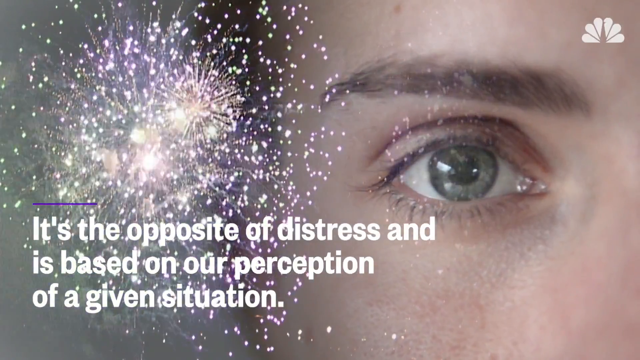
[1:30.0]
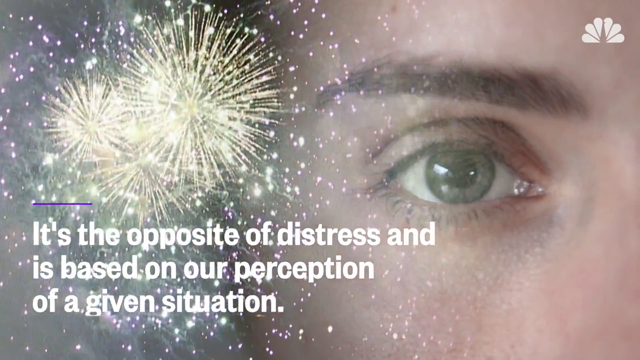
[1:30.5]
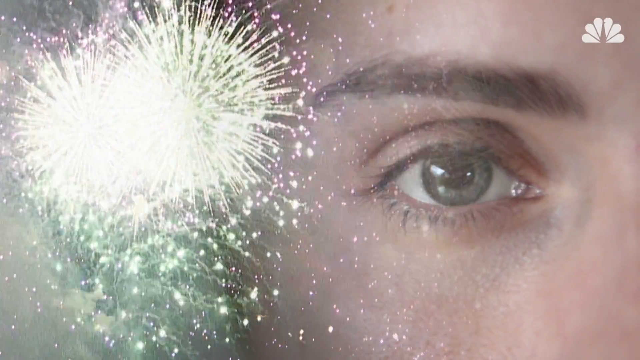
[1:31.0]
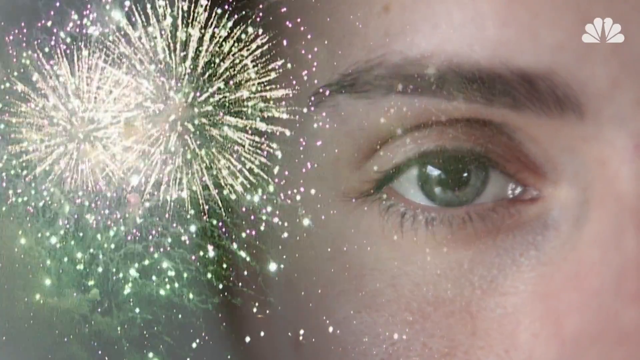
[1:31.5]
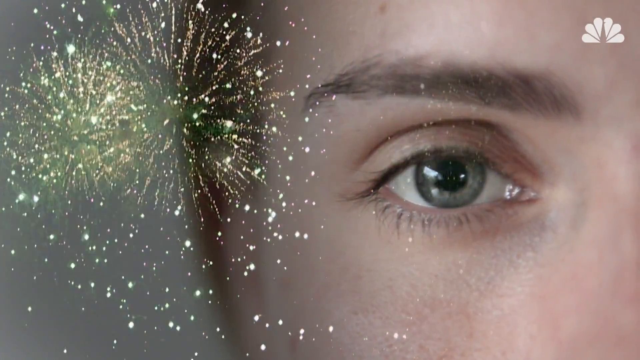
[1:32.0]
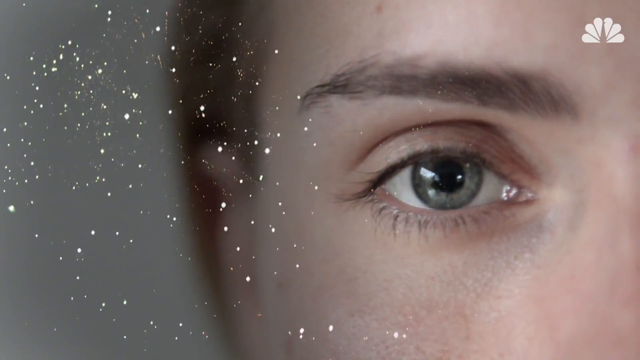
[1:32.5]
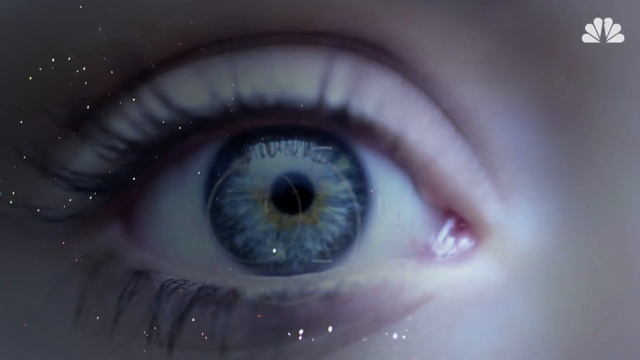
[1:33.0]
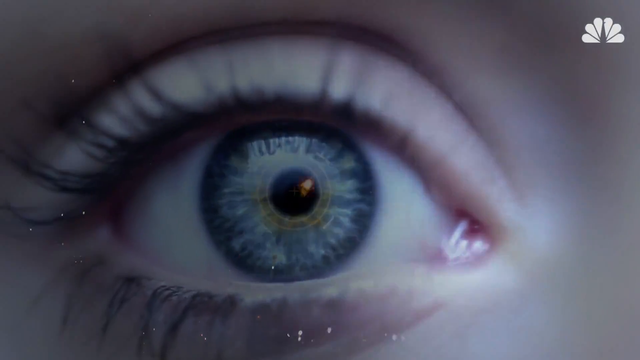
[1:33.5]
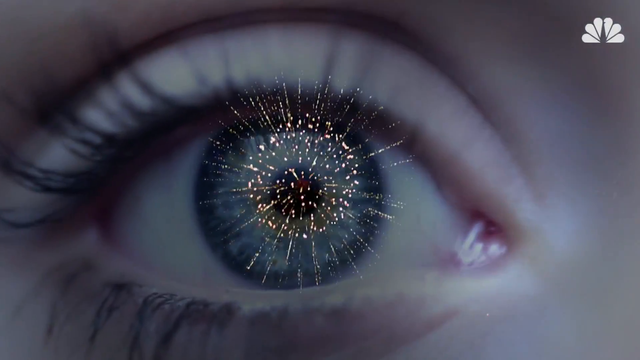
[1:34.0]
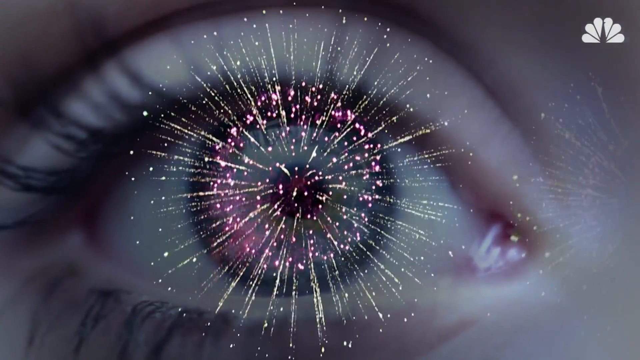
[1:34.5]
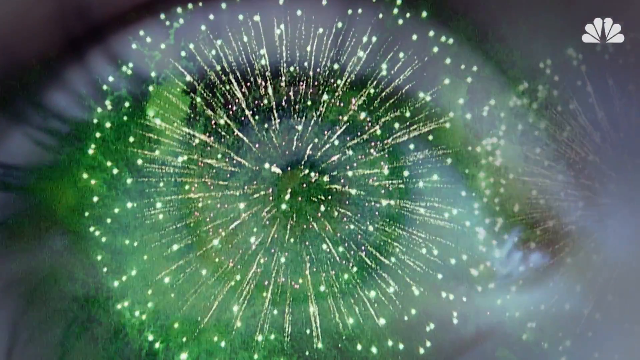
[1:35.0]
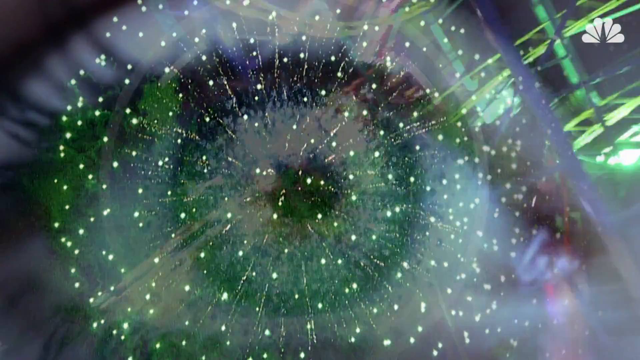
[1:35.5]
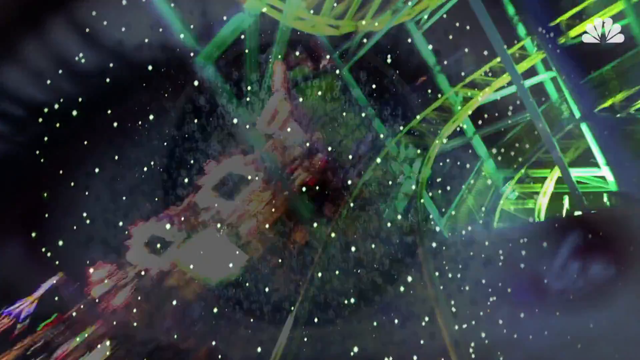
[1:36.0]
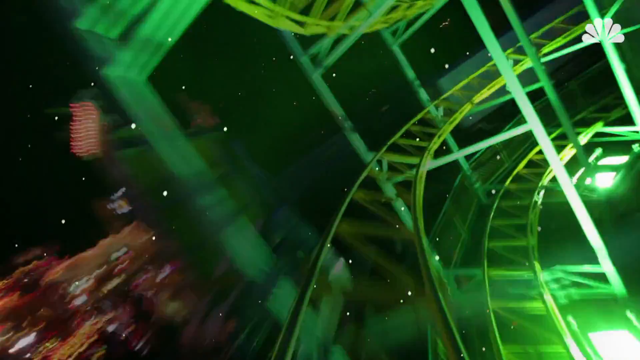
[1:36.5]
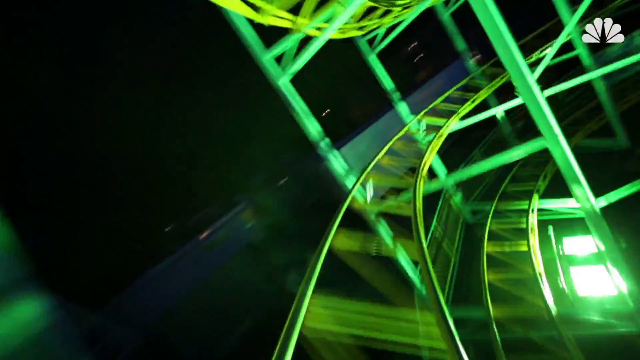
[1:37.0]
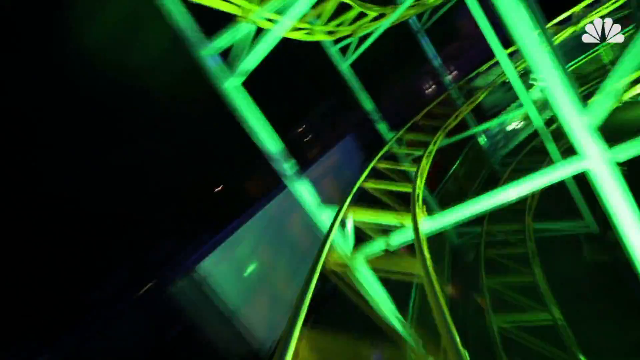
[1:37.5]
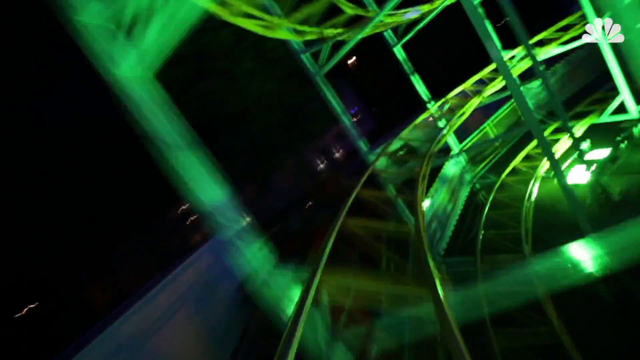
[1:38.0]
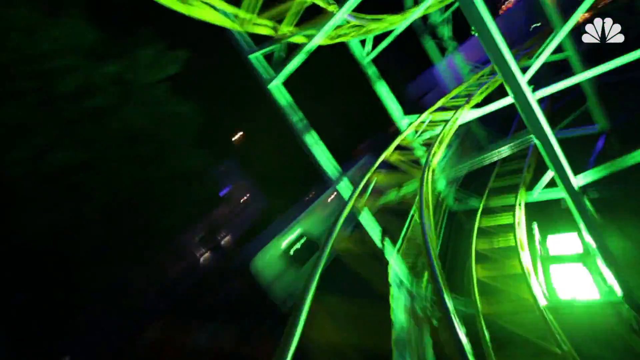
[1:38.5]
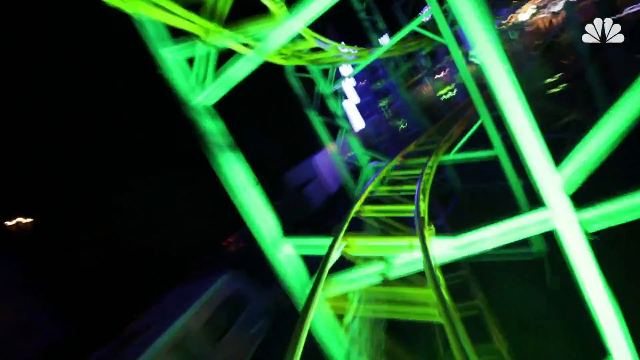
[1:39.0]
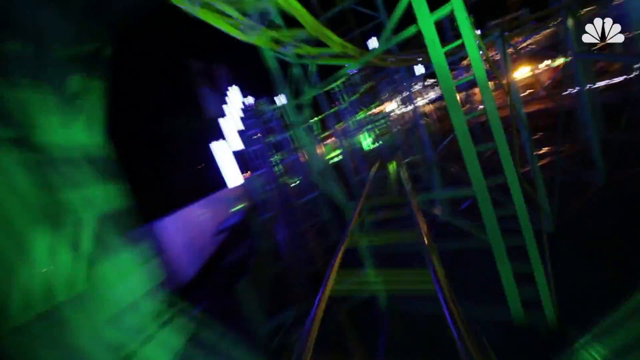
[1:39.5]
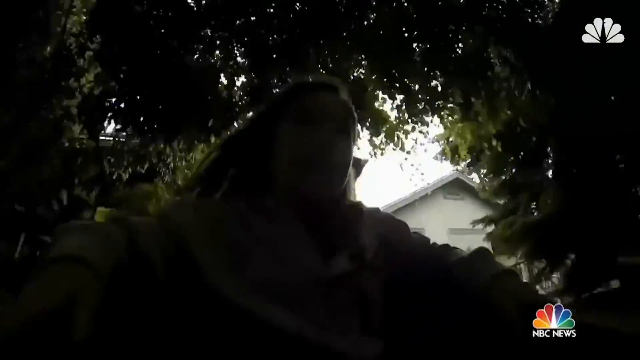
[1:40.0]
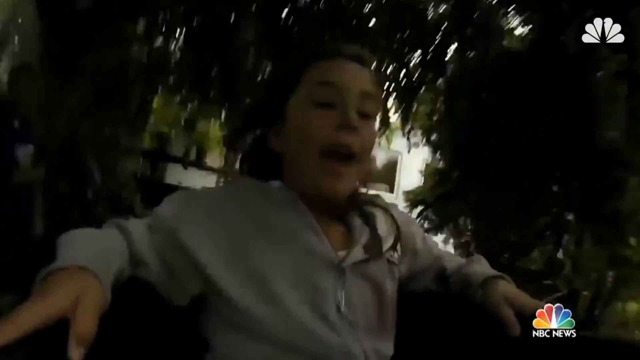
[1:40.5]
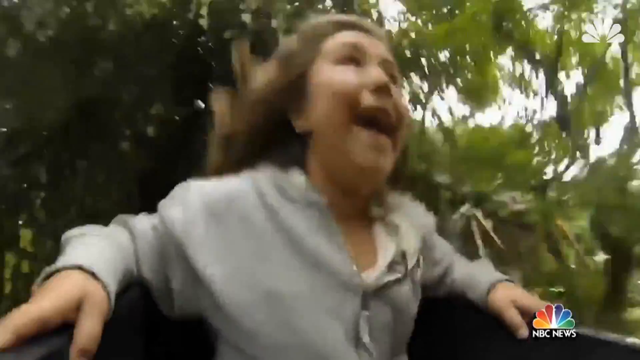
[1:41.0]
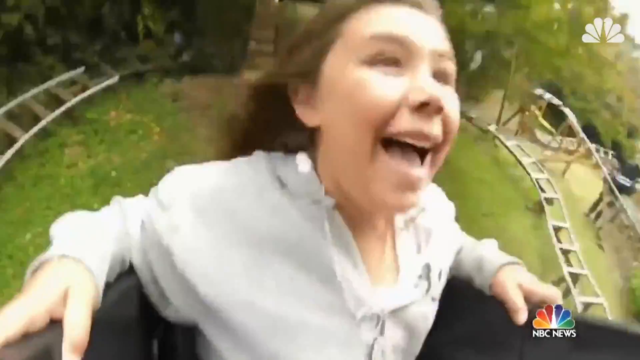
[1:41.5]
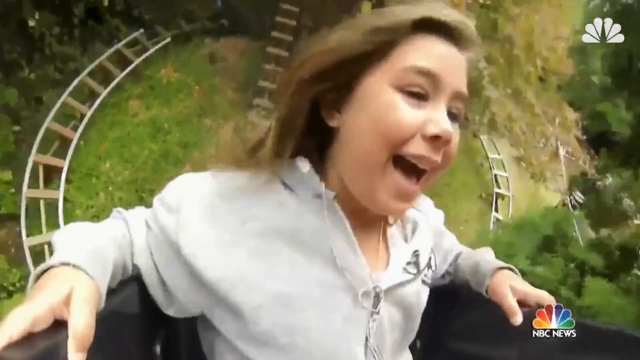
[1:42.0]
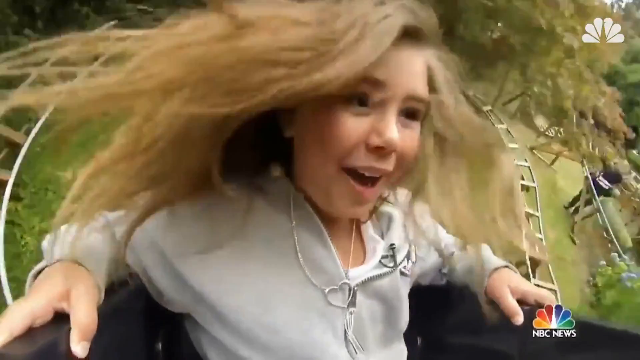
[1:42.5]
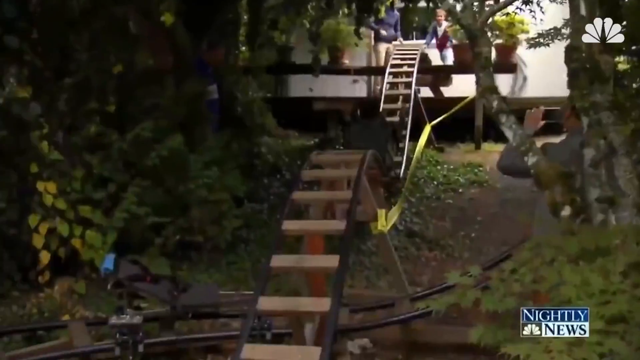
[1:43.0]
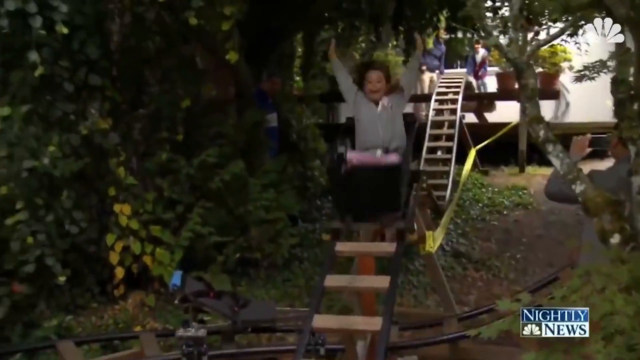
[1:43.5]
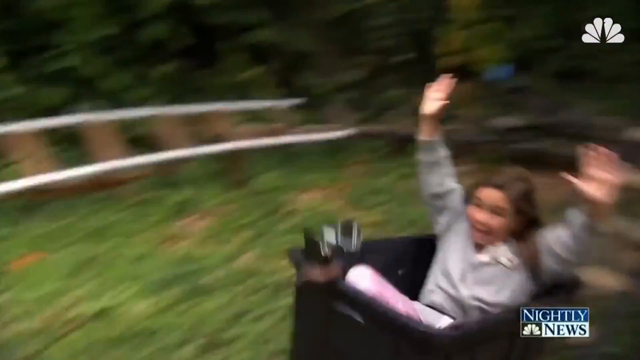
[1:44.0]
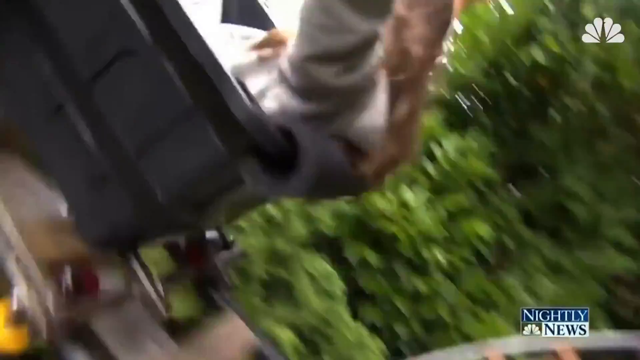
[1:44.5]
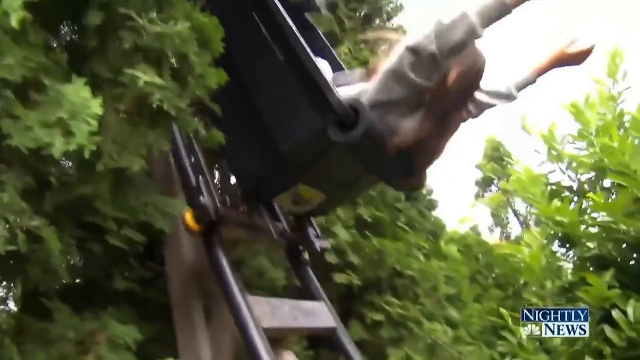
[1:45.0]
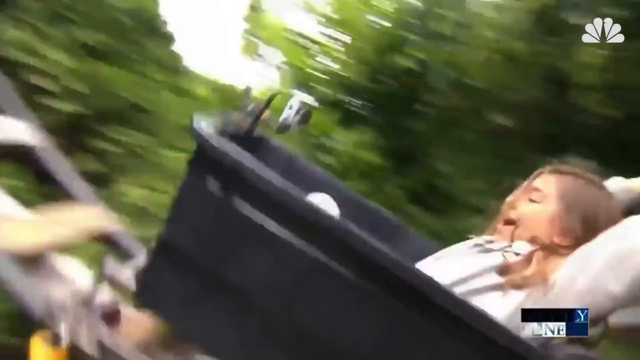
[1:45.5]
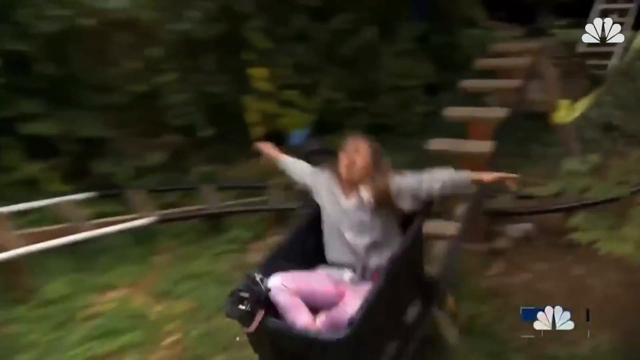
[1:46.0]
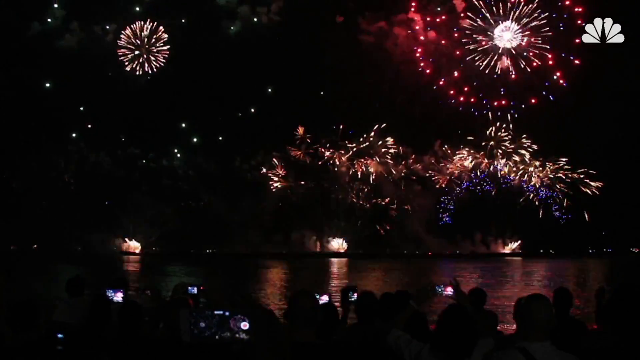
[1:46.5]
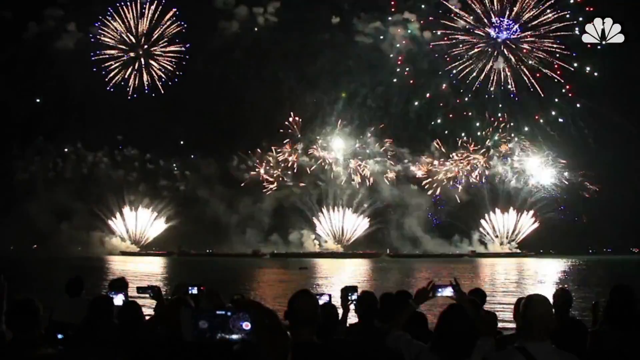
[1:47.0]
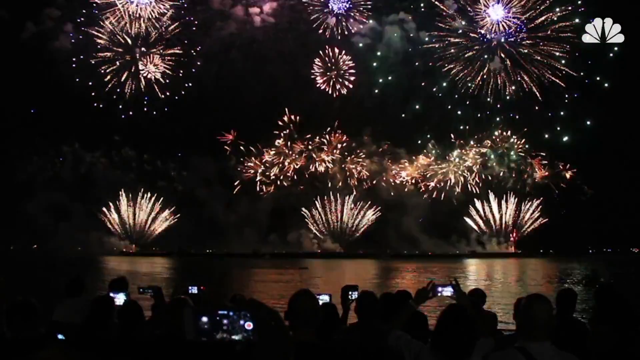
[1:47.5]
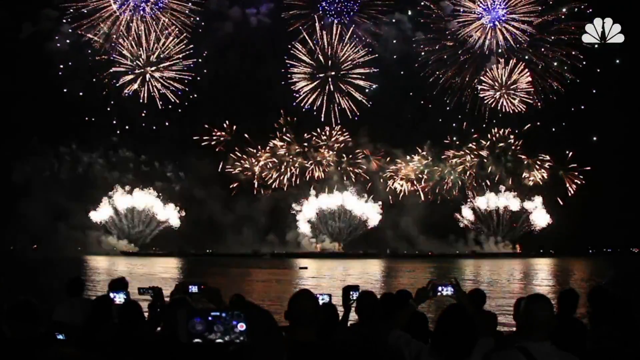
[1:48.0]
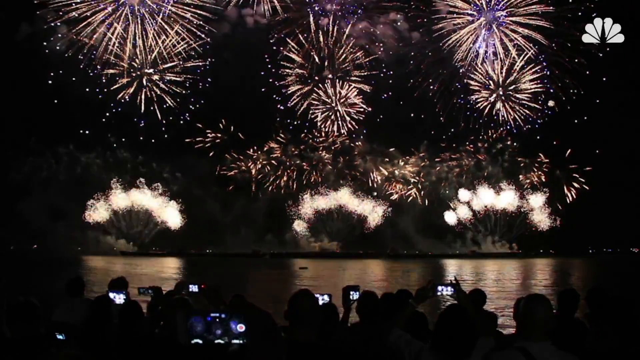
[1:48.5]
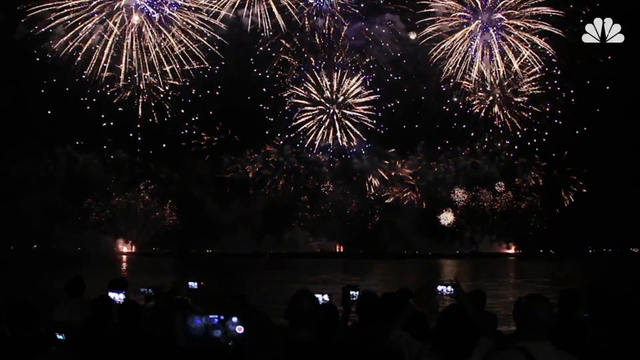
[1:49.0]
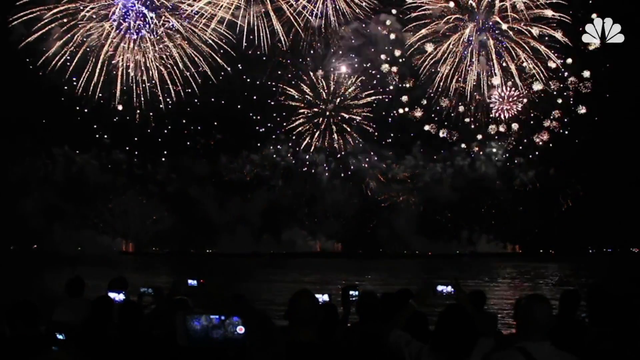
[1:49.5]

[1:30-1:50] A woman says "it's the opposite of distress and is based on our perception of a given situation". In the background, a female's eye looks toward the camera, and a firework is set off to the left of her. The shot then zooms in and focuses on the woman's eye, with graphics and special effects coming from her eye and face. A woman rides a roller coaster in a theme park, showing positive reactions as she moves round; her facial expressions suggest she is enjoying the ride. A girl in a wooden roller coaster is also shown, seeming to have lots of fun. Several fireworks are then set off.